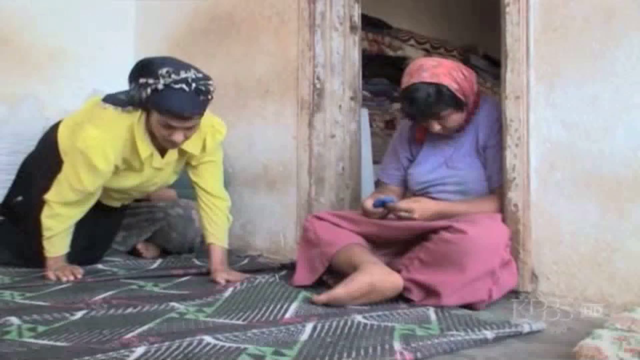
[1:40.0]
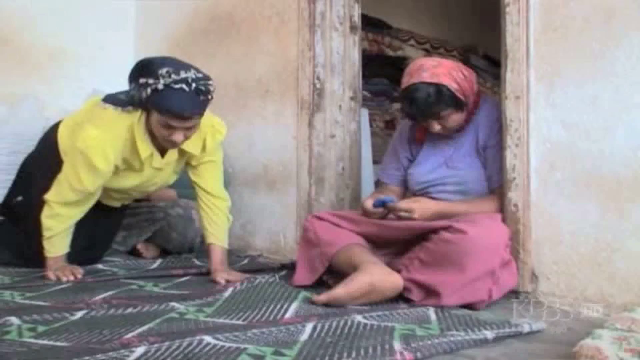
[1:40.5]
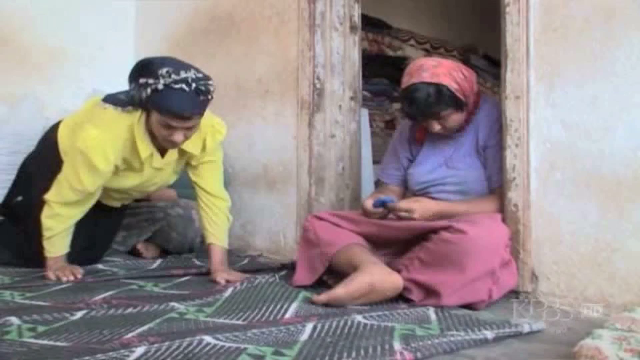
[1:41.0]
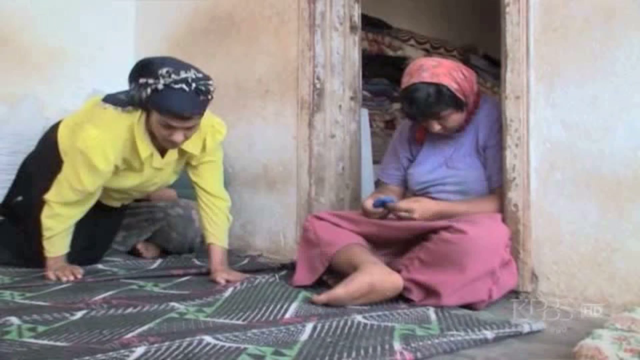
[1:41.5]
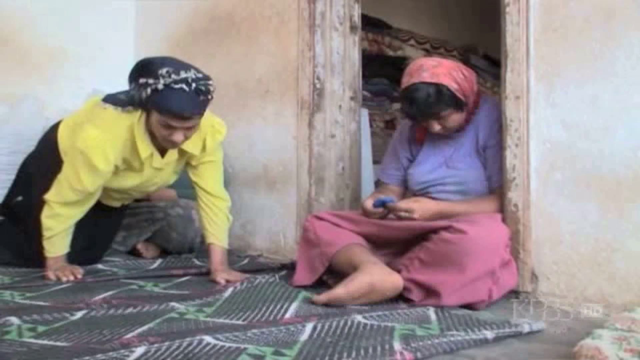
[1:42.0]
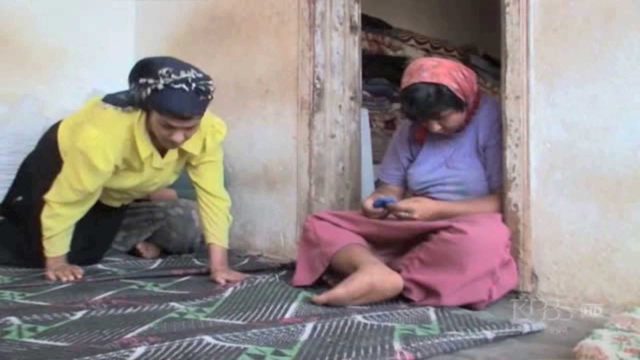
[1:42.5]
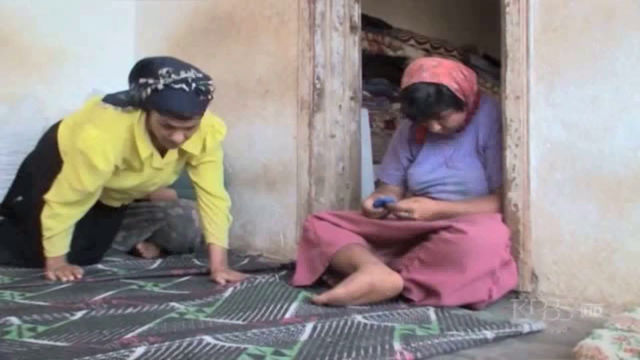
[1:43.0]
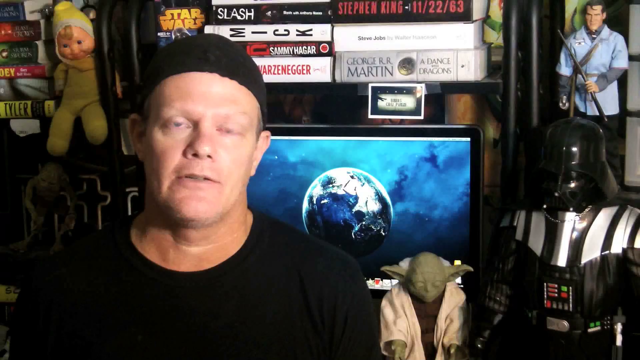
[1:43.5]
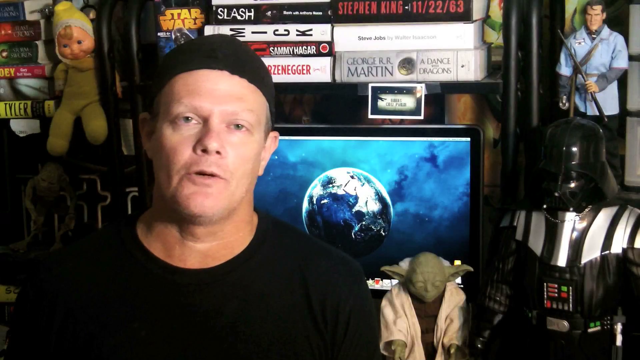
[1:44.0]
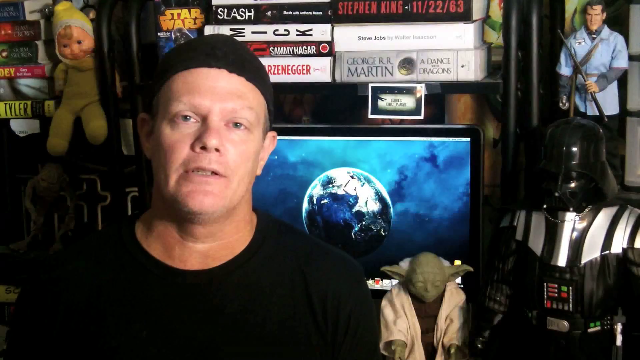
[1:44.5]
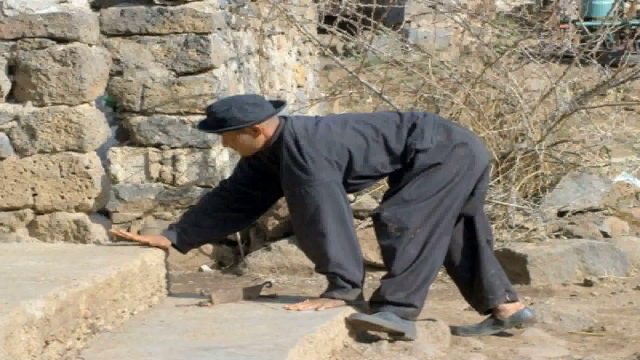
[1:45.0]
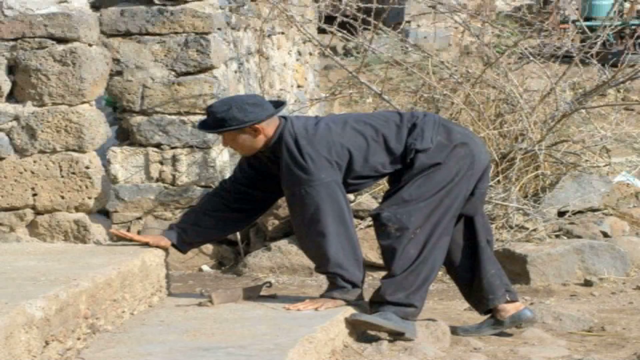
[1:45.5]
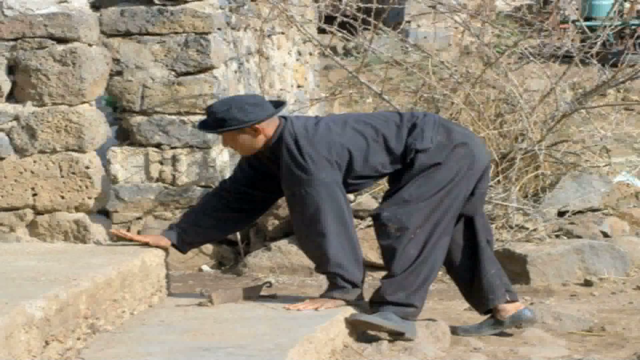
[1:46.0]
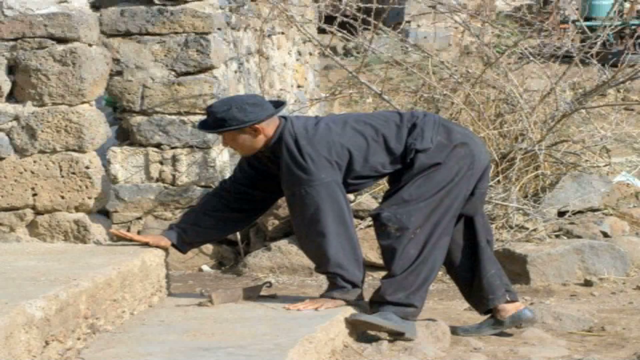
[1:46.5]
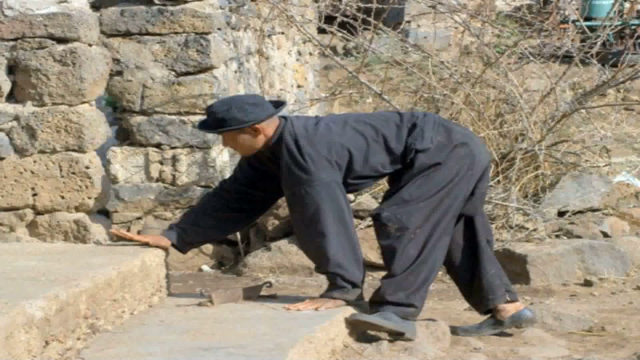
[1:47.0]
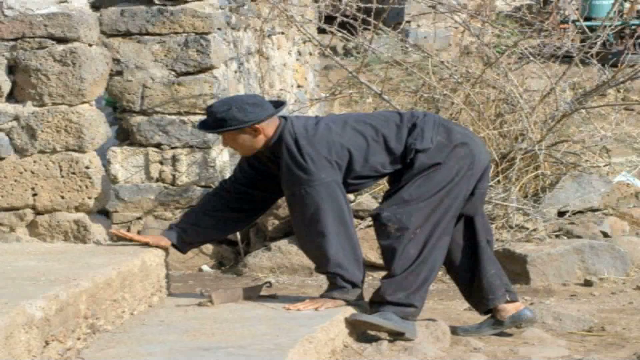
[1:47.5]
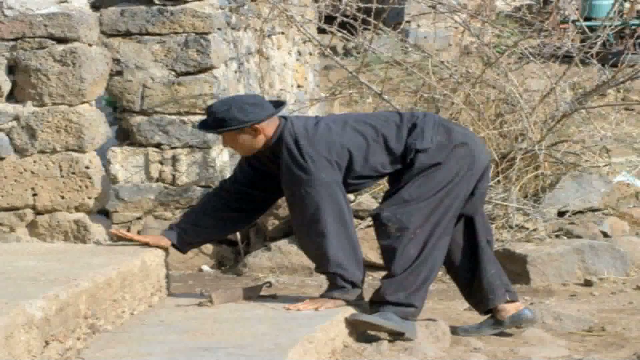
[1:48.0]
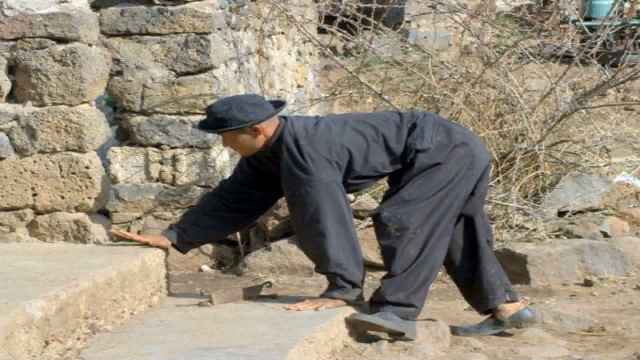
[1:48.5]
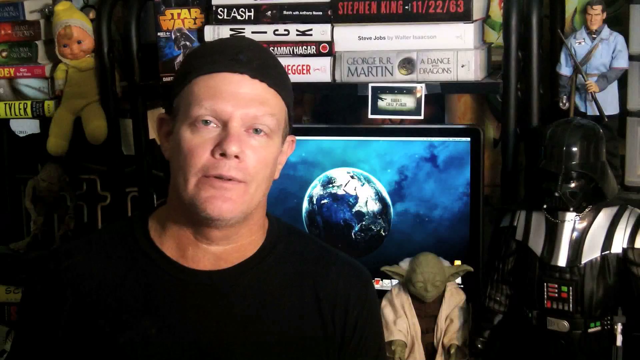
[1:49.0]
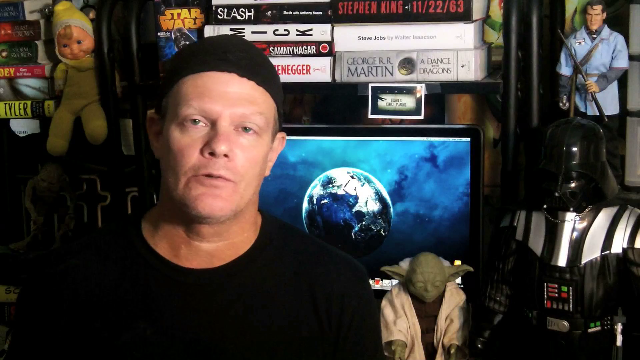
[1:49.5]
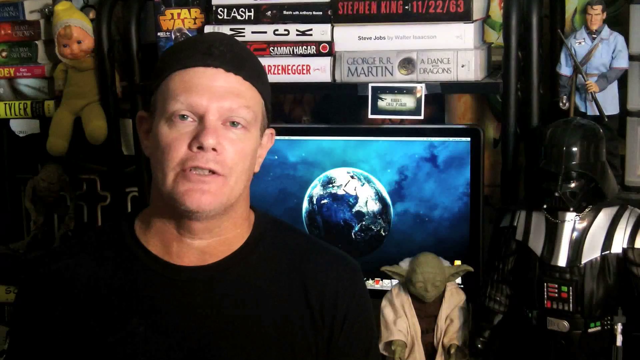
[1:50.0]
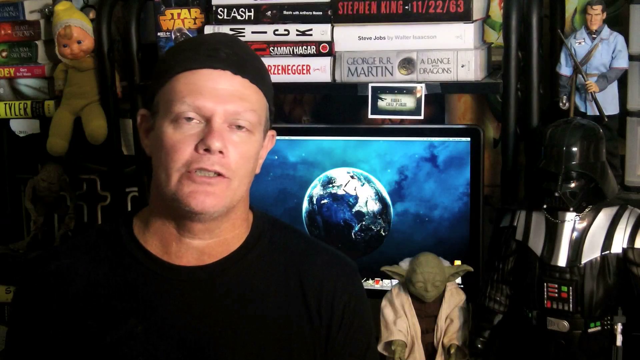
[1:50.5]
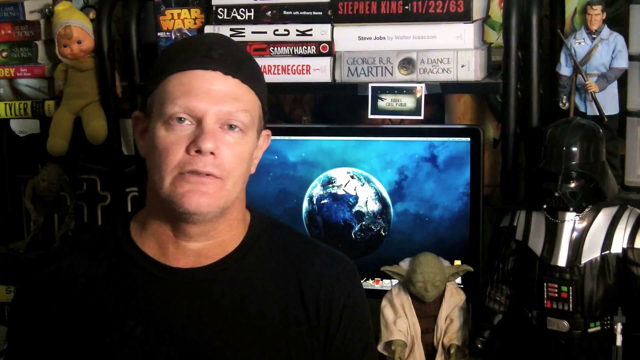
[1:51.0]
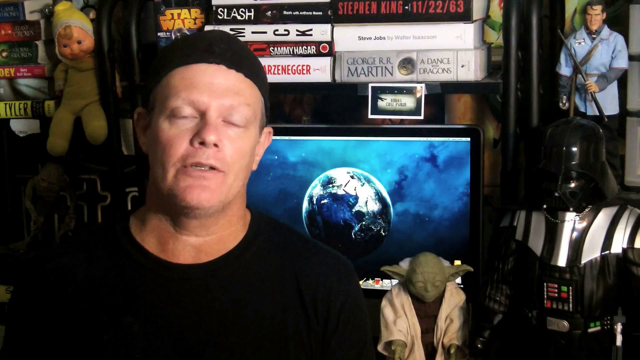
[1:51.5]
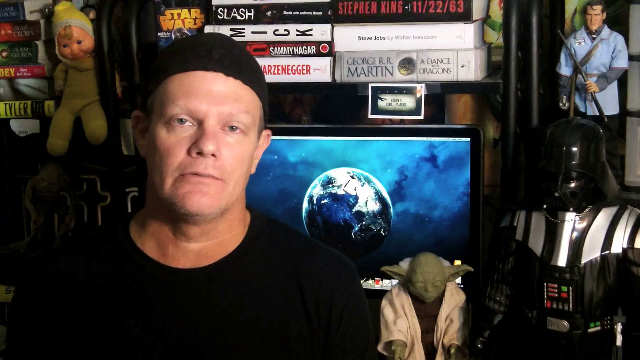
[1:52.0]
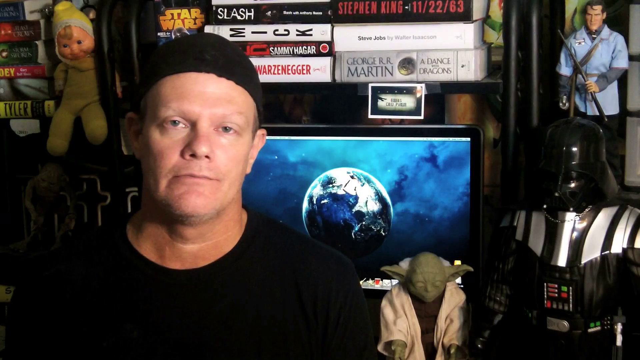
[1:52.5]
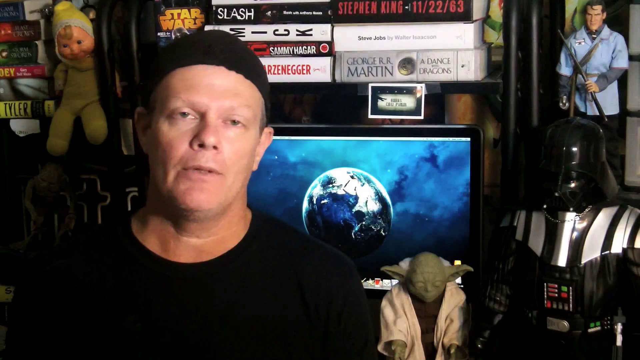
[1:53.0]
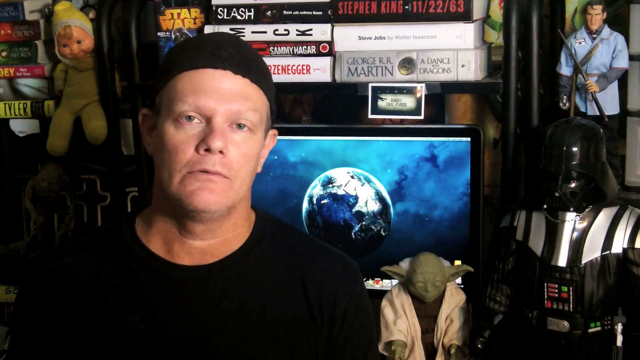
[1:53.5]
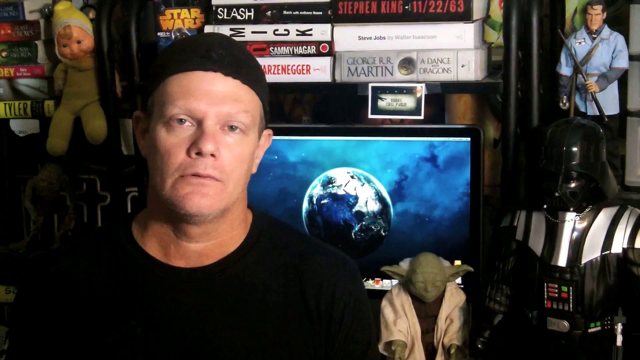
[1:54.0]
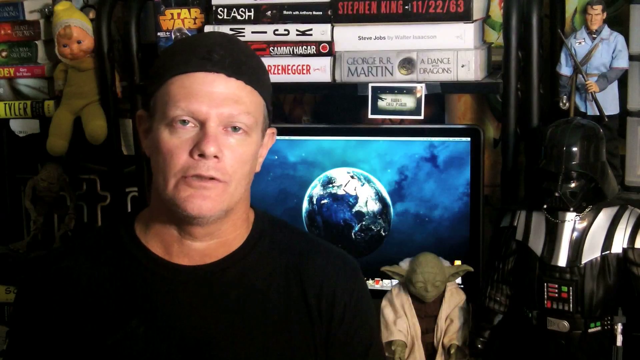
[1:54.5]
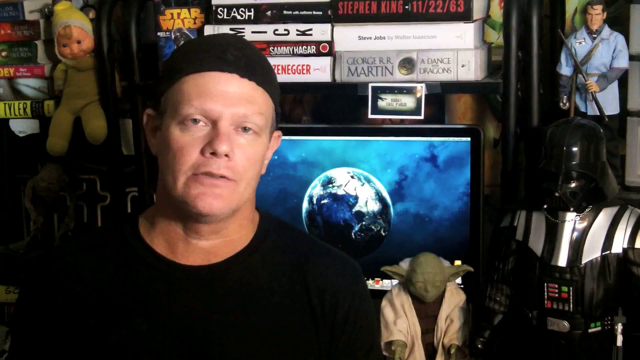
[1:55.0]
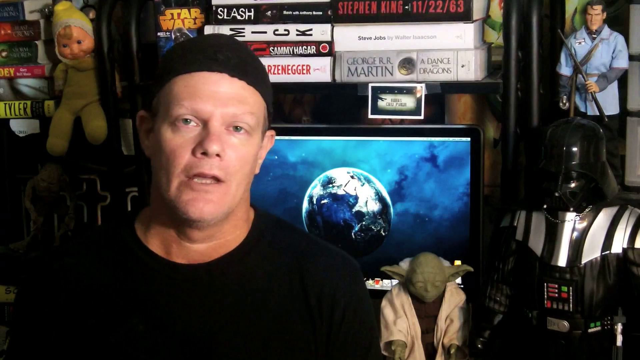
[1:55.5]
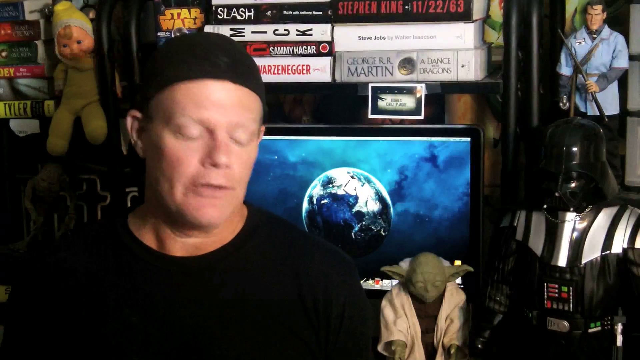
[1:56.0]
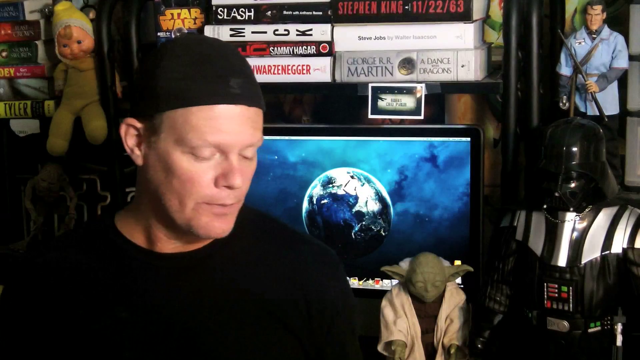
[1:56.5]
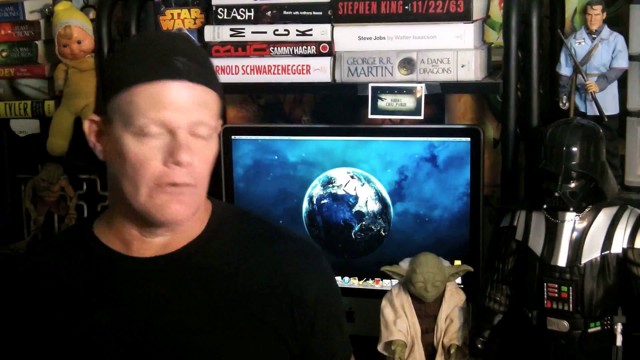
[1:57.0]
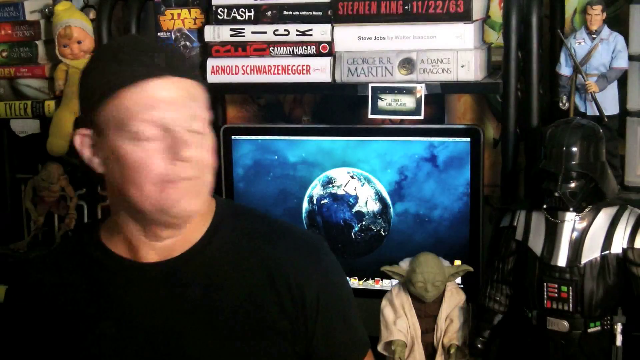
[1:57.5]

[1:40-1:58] A man on the left wearing a yellow shirt walks on his bare hands, and a woman is on the right. After some time, the man appears in front of a television showing a picture of the earth, with a Yoda figure and Darth Vader, some other weird dolls, and a figure of some fighter at the top right. A man dressed in black is taking steps on some brick walls. Toward the end, the man with no beard or mustache, wearing a black cape and a black t-shirt, talks. A George R. R. Martin, Game of Thrones-related book is on the shelf behind him.